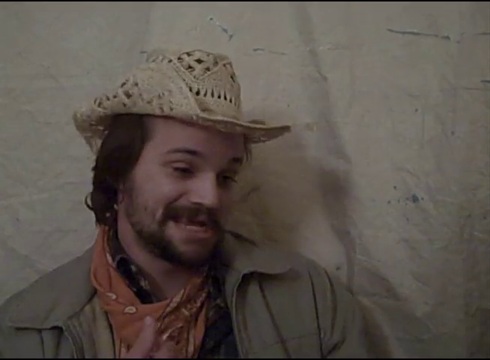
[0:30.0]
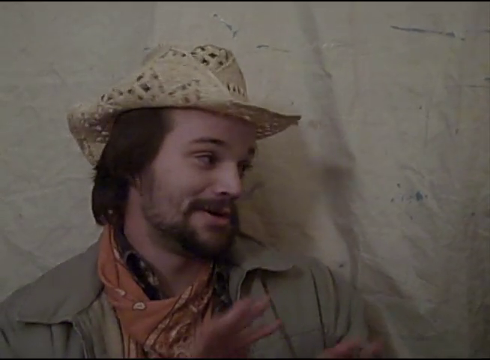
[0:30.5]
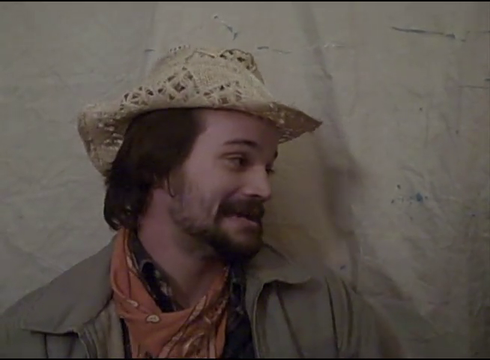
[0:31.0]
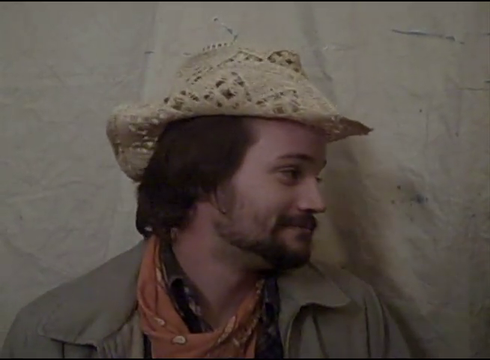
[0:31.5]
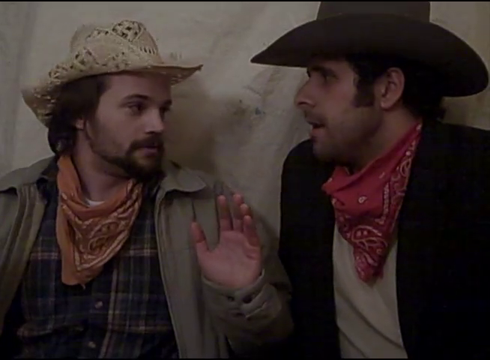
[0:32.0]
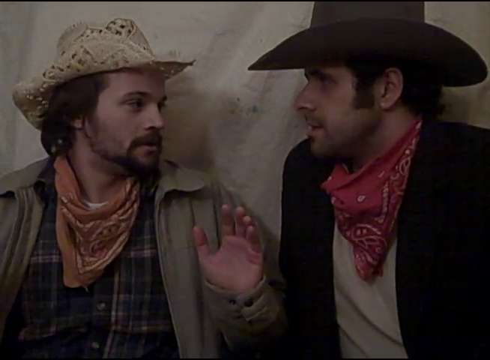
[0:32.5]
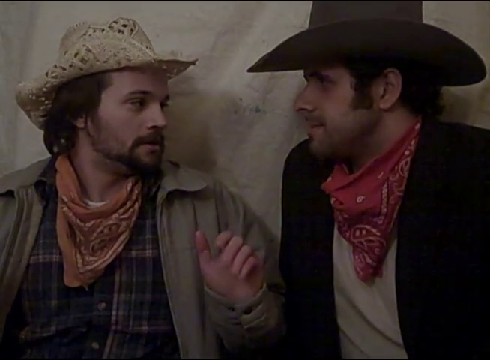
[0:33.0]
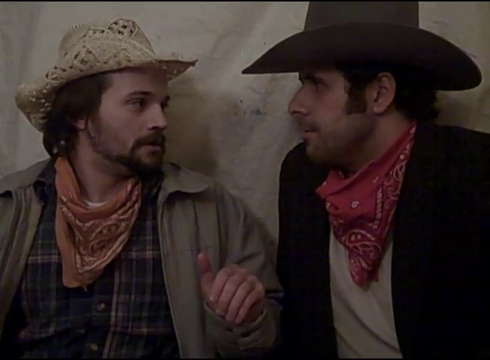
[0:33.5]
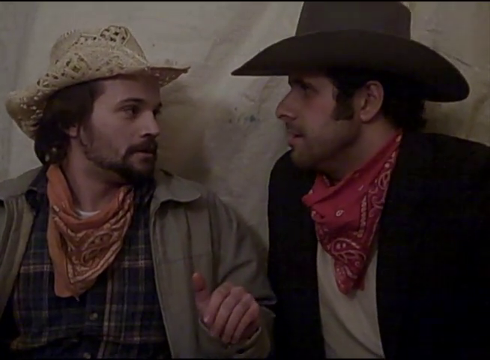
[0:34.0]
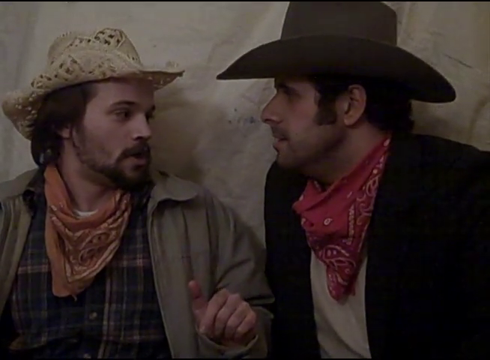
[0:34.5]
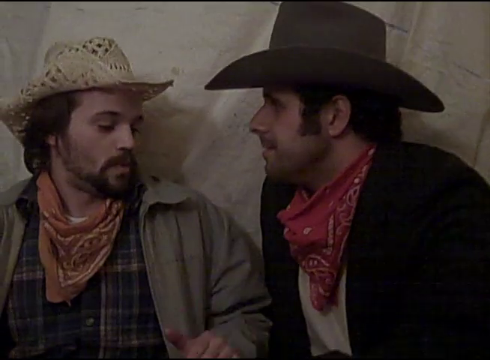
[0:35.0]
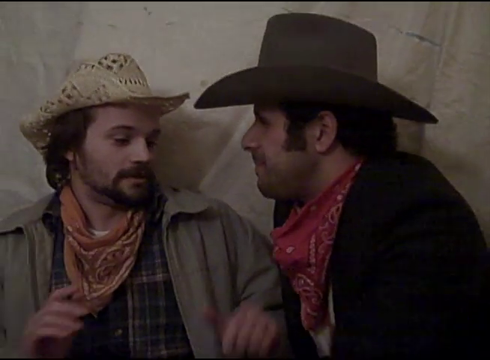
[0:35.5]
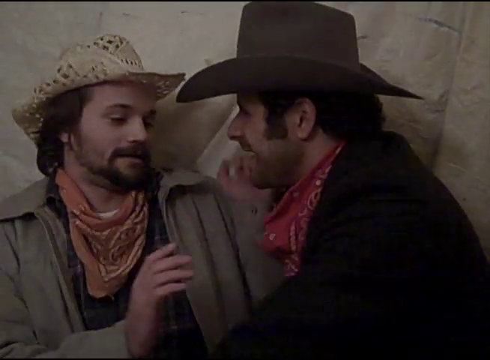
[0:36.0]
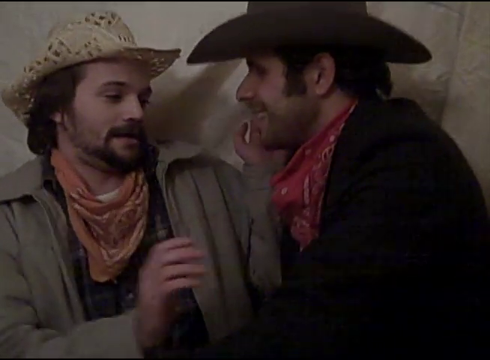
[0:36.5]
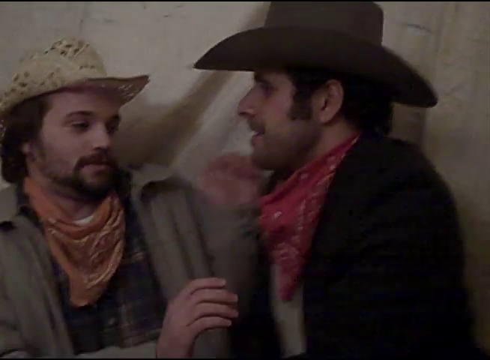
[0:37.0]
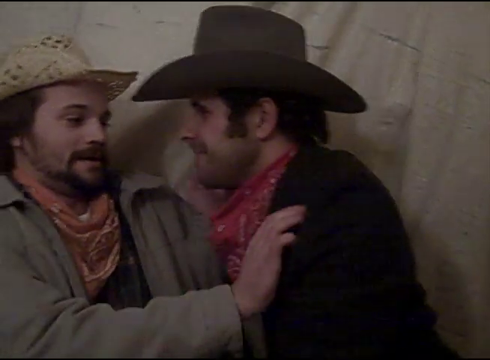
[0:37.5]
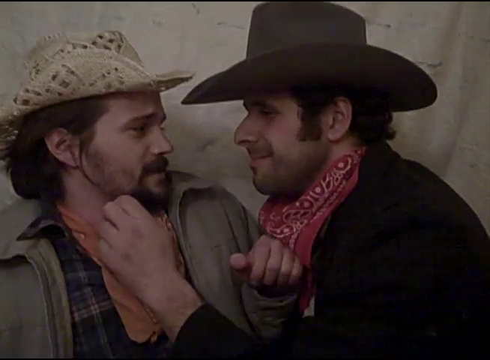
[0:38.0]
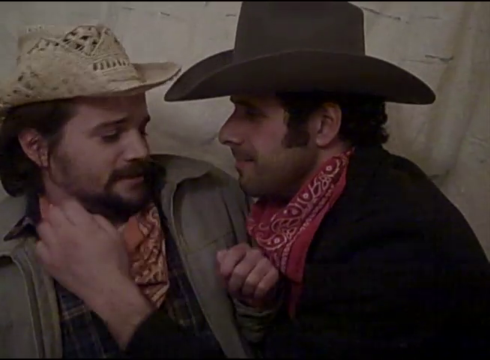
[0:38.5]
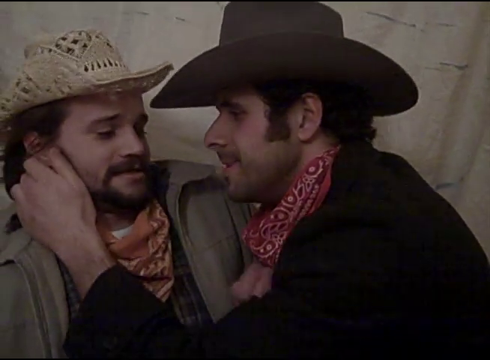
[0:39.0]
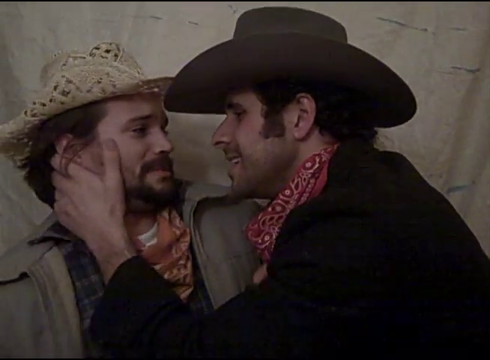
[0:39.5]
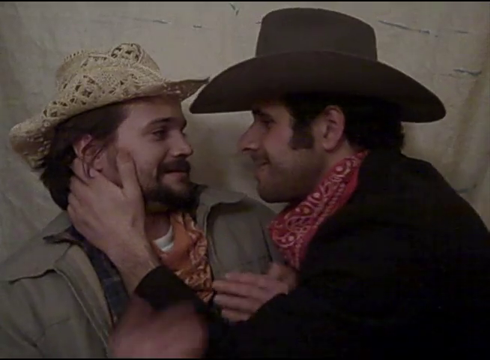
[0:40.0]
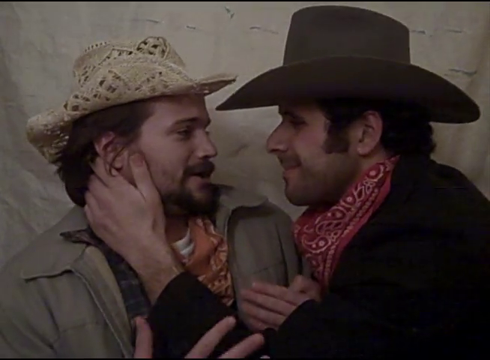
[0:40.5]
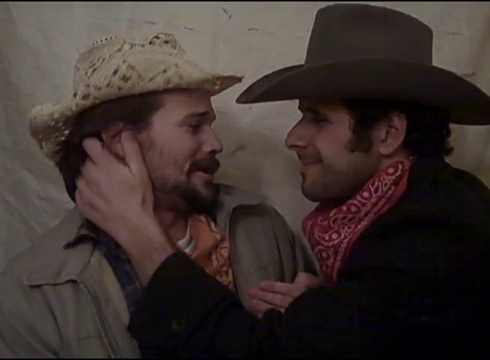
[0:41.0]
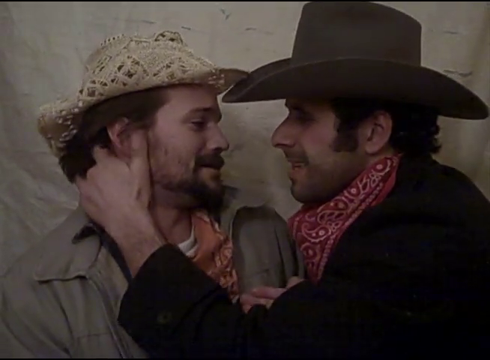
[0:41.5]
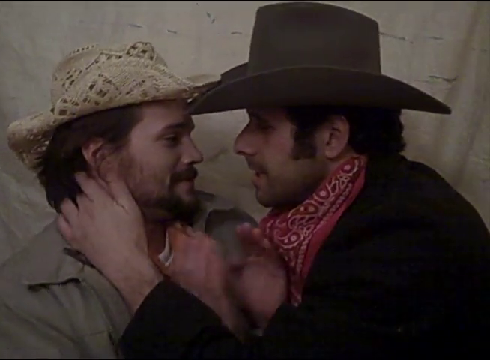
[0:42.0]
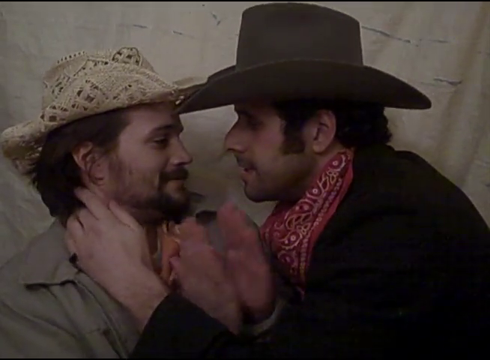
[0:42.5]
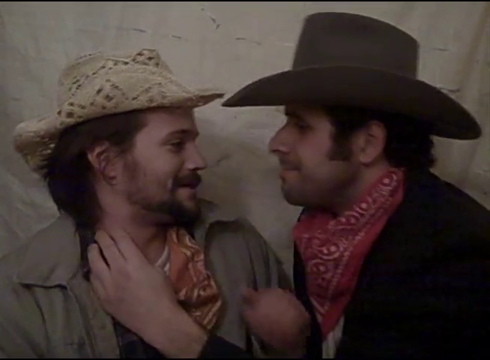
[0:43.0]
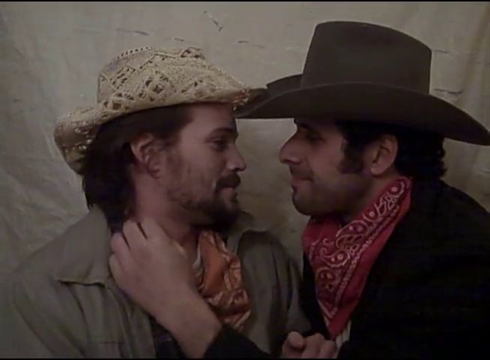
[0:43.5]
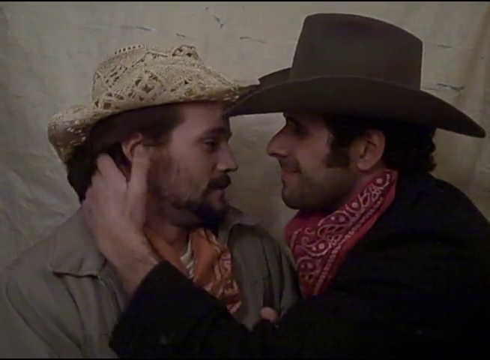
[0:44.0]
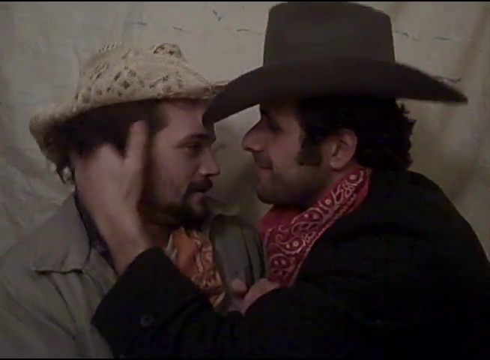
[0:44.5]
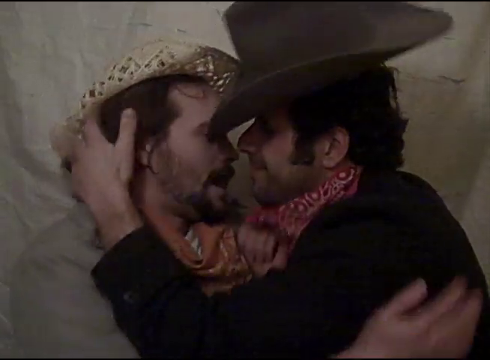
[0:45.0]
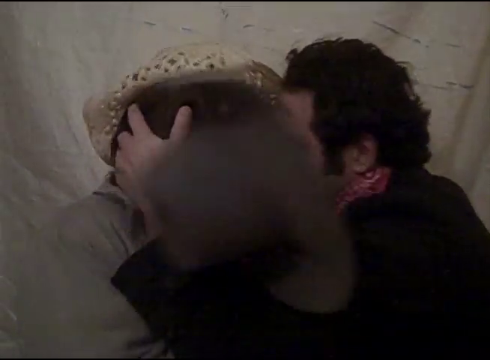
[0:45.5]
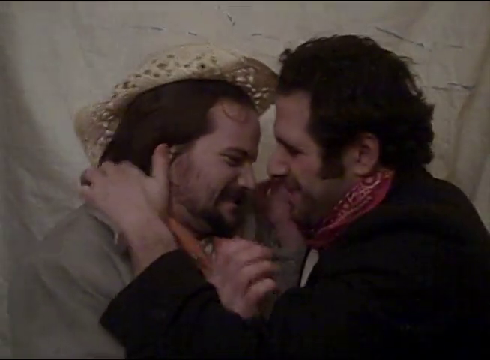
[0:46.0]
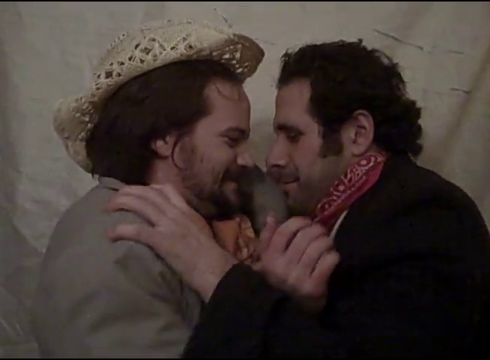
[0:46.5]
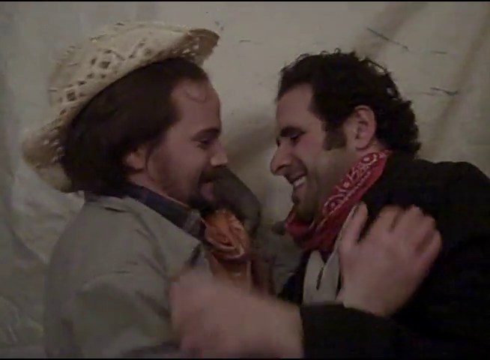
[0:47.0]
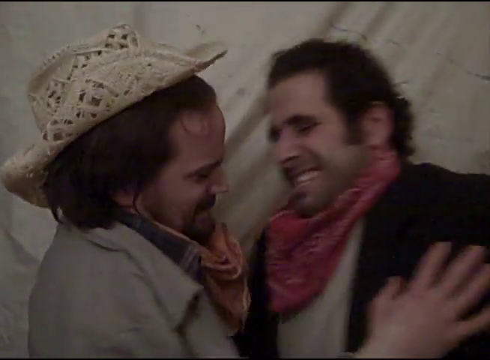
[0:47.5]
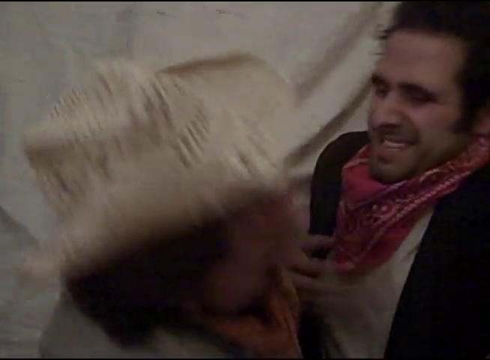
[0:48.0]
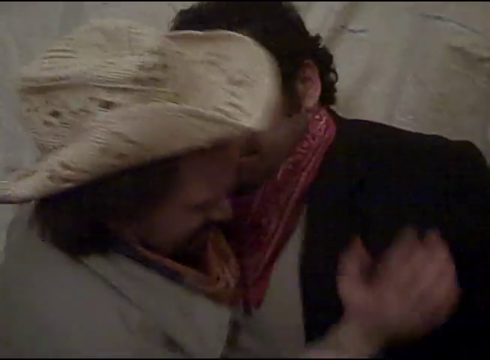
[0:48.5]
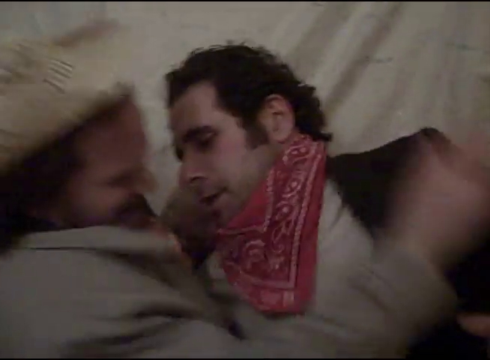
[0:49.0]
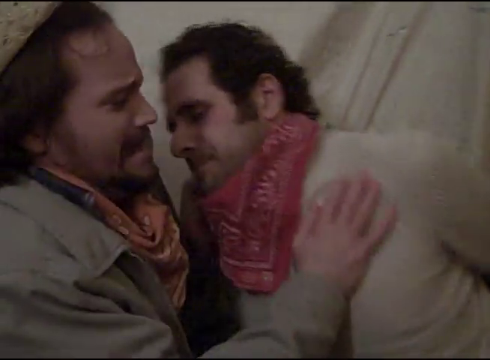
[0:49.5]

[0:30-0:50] On the left, a basic-looking man, perhaps in his early 30s, with dark brown hair, a beard and a mustache, wears a macrame cowboy-style hat, a jacket with a collar and a red bandana. The video is grainy and grayish, and there looks to be a sheet hanging behind his face. He engages with another man on his right, who sits very close to him, and they look eye to eye. The other man, perhaps around the same age in his 30s and wearing a dark cowboy hat, seems to lean in, smiling, while the other cowboy puts his hands up, looking quite innocent and giggly, as the cowboy on the right grabs the man's hand, as if pulling his head inward in a moment of passion. The scene is somewhat of a parody, with a bit of humor, as if the men are trying to hold back from laughing.